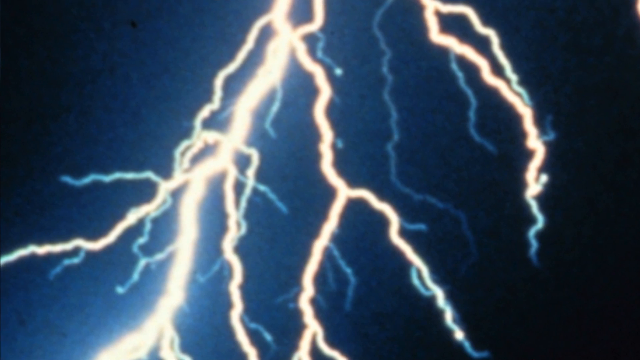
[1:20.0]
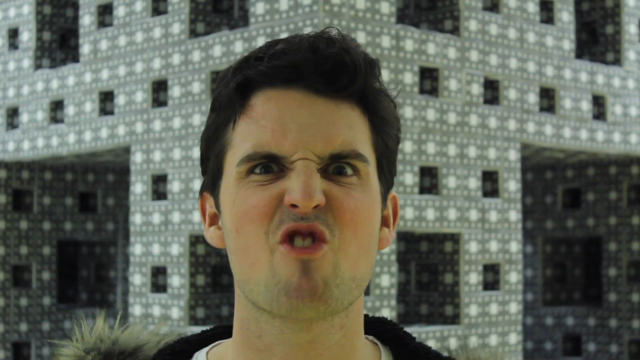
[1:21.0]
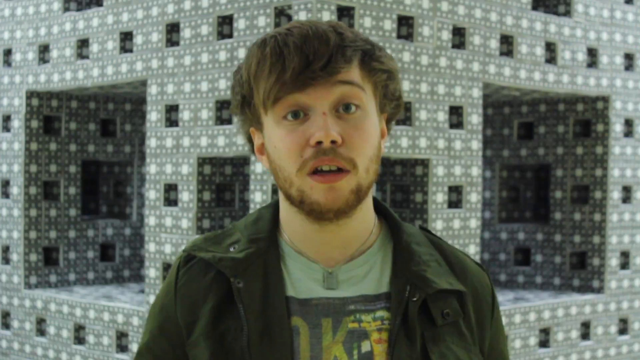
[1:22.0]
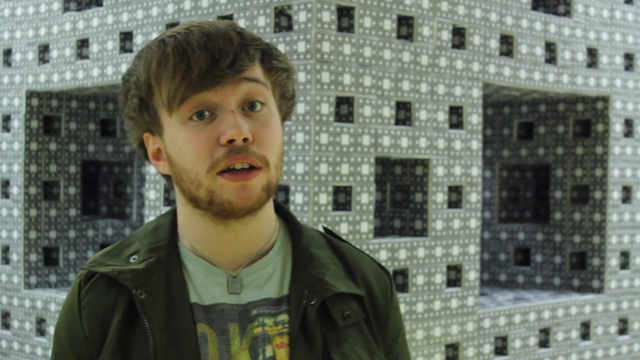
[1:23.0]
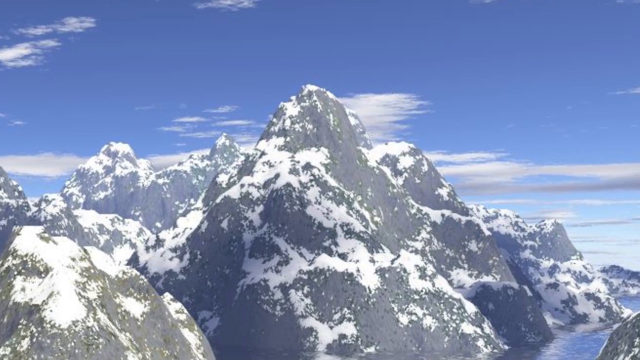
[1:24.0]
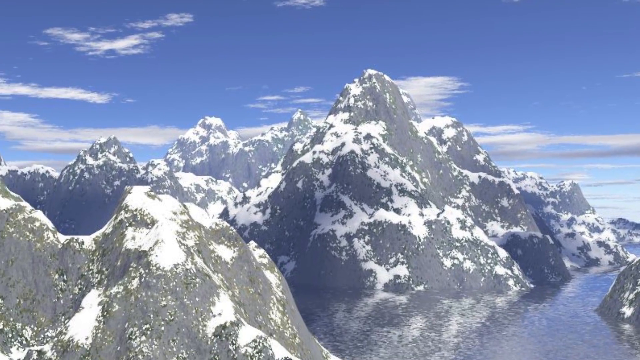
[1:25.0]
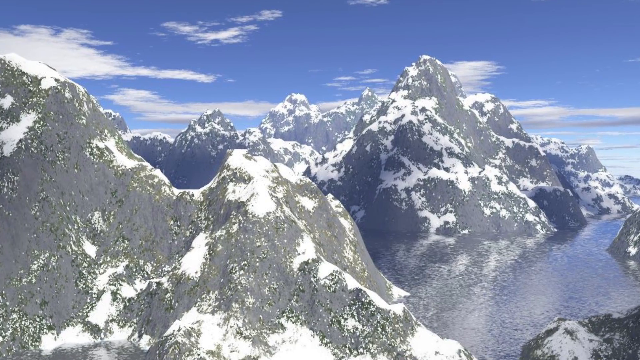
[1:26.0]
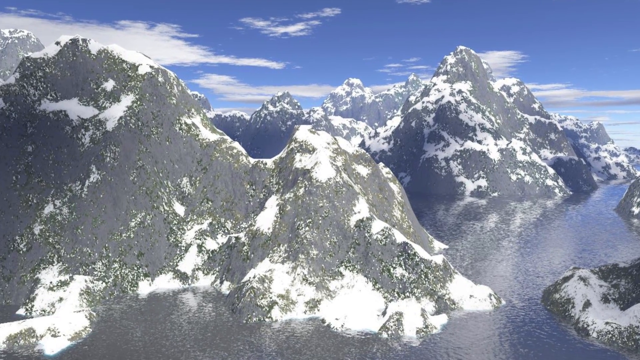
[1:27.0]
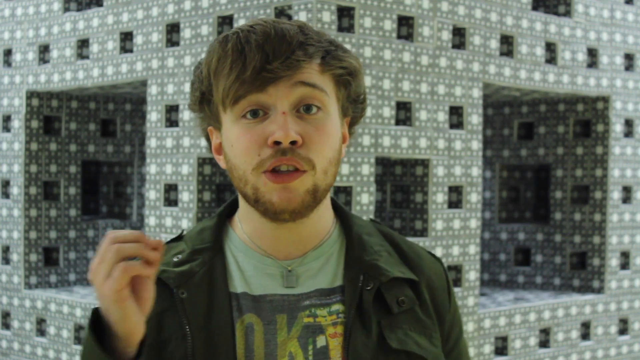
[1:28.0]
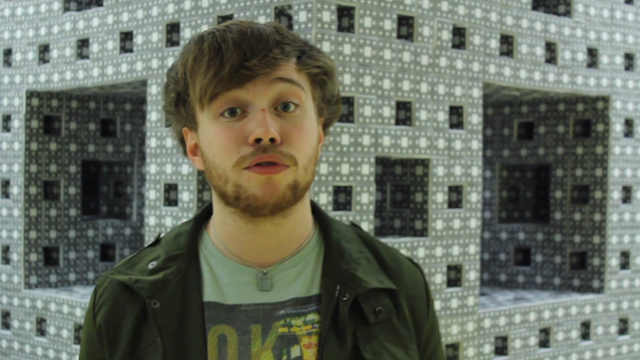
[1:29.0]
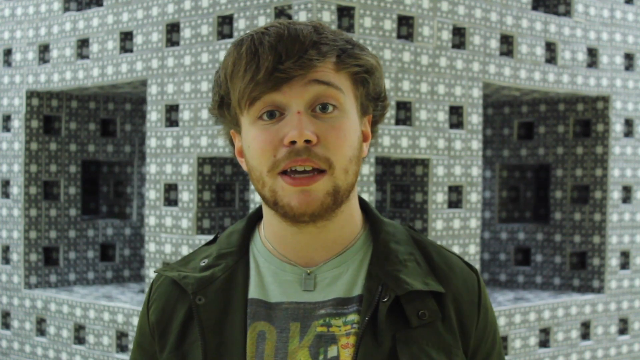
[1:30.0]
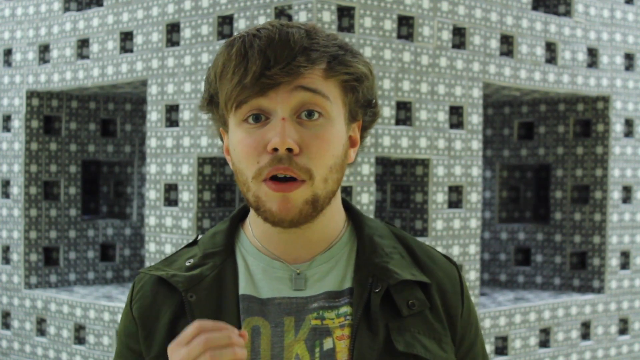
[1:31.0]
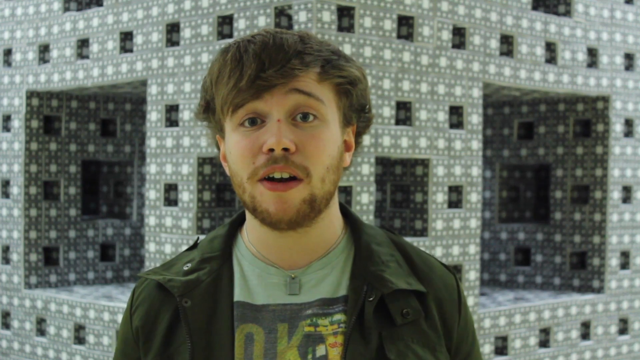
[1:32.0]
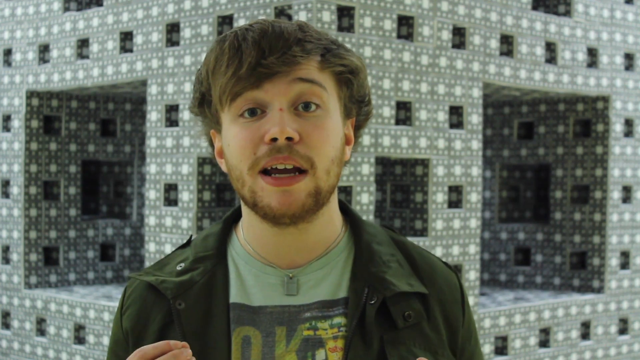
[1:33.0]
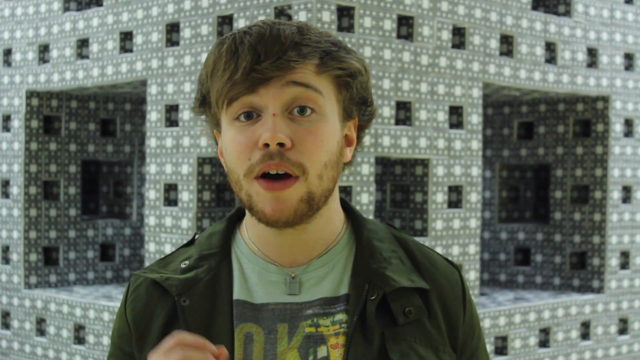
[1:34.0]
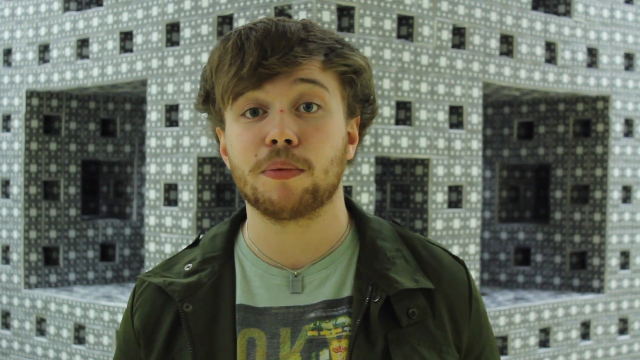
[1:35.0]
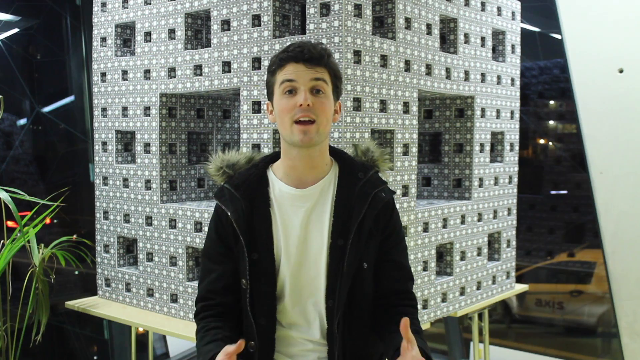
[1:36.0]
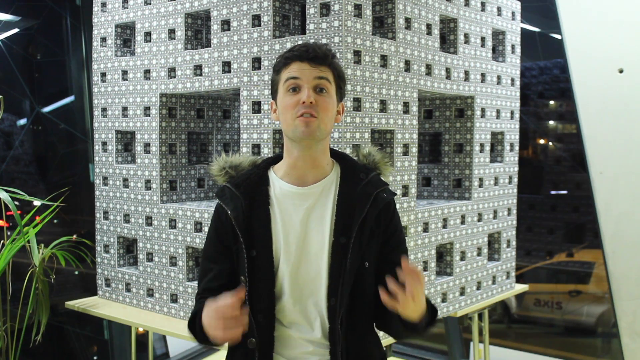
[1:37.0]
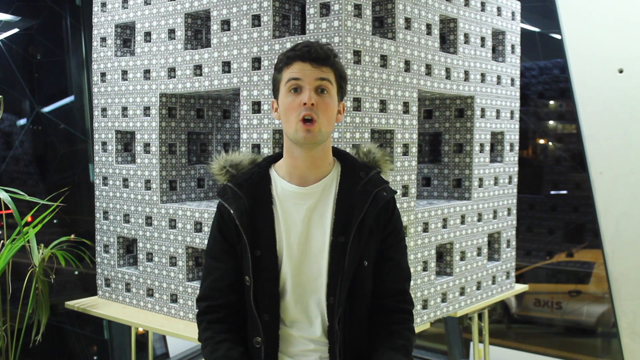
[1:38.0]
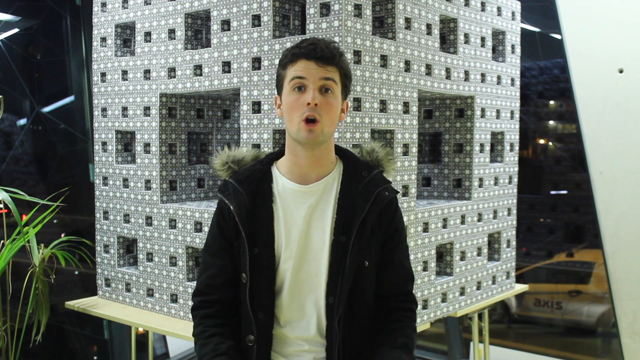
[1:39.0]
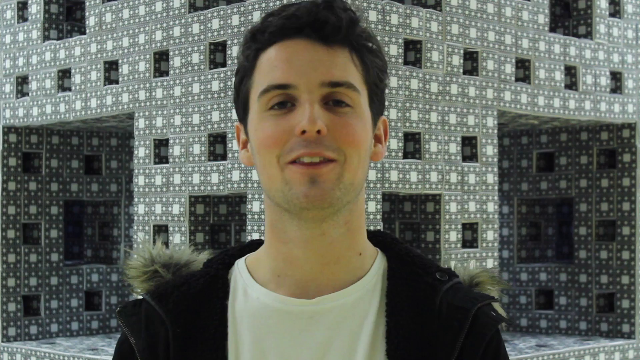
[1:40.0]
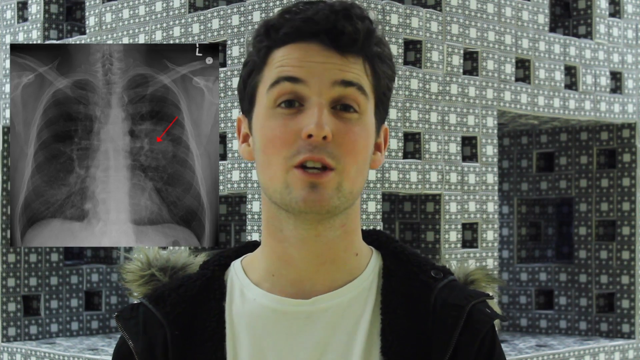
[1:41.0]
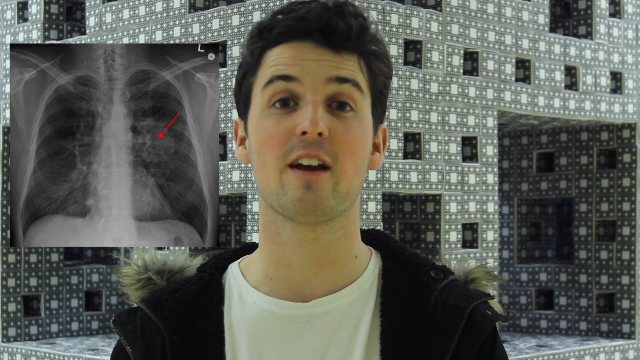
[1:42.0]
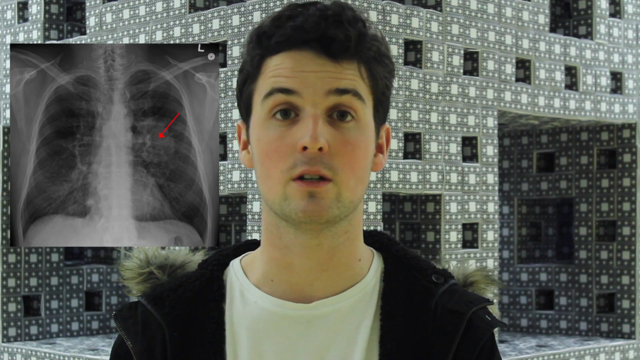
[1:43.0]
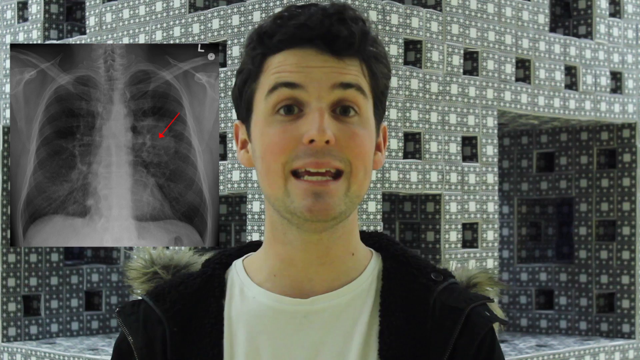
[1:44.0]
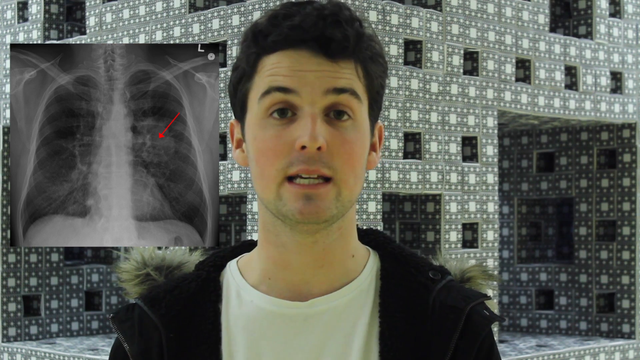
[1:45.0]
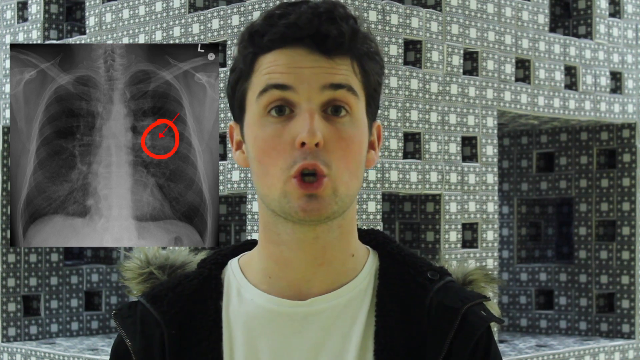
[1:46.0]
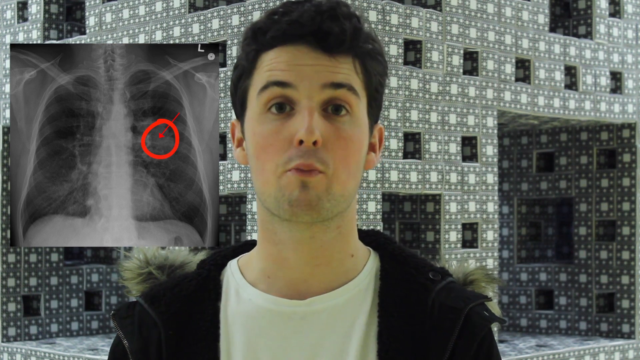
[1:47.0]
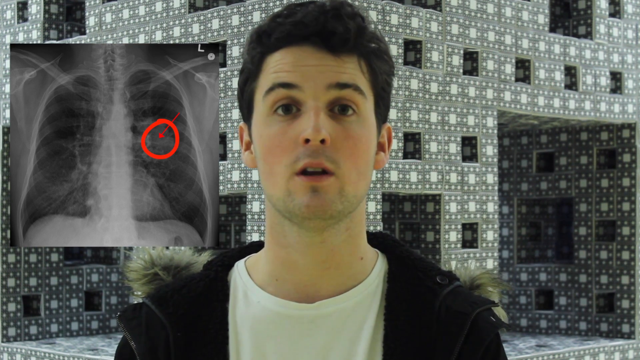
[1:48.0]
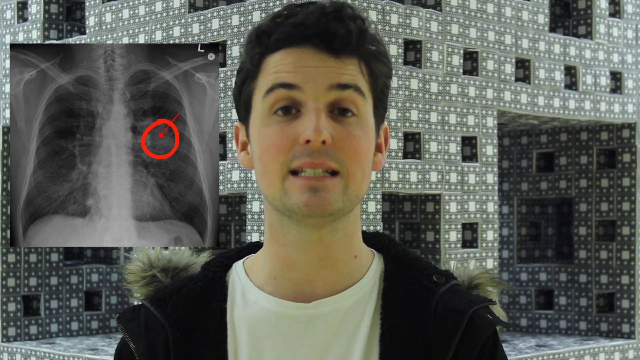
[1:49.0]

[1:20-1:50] An X-ray laboratory of a man is shown, and then a lab where young men and women are working and delivering architectural designs.